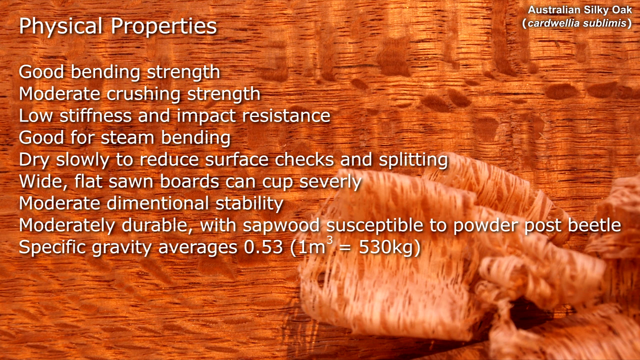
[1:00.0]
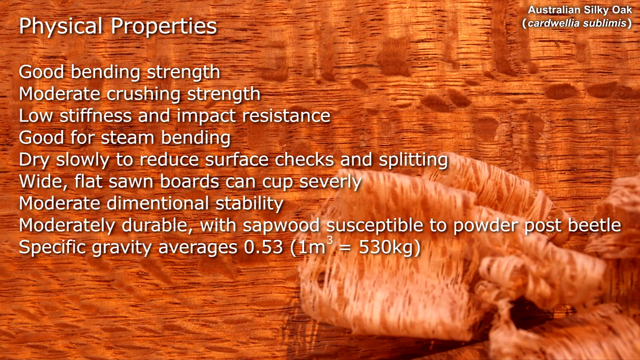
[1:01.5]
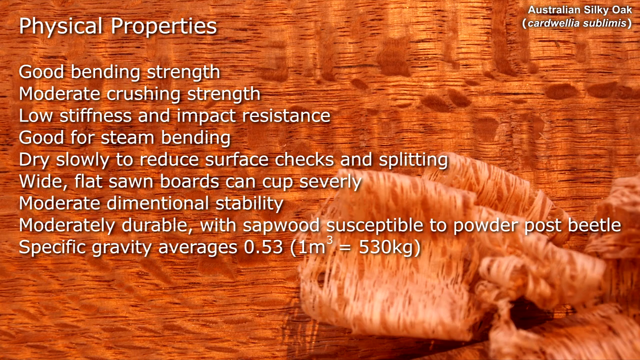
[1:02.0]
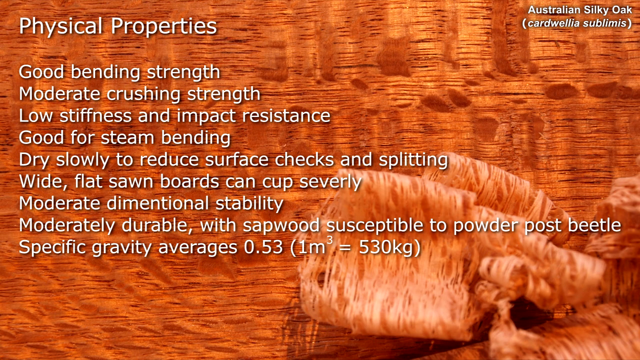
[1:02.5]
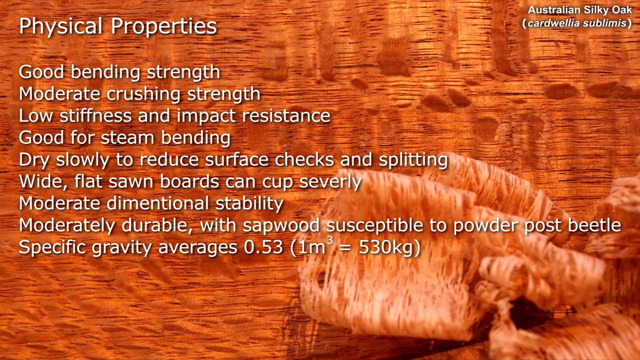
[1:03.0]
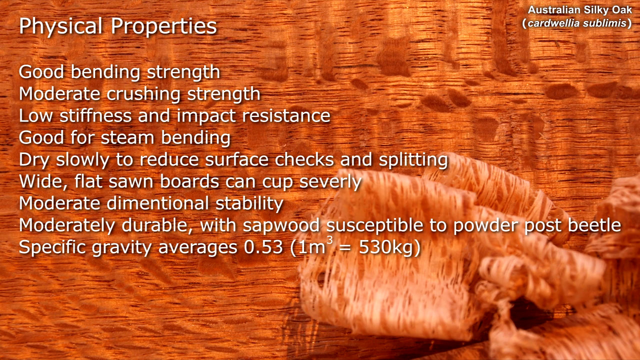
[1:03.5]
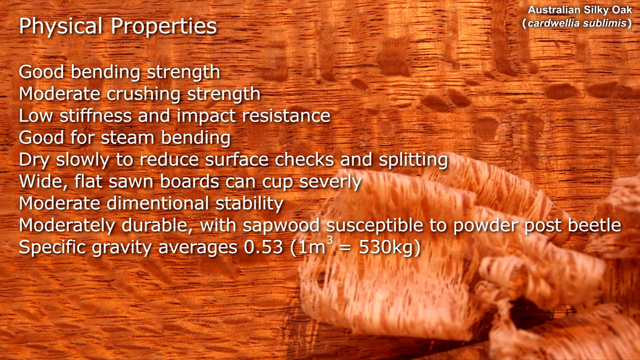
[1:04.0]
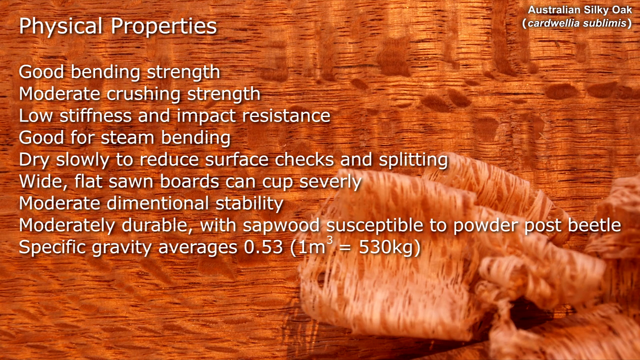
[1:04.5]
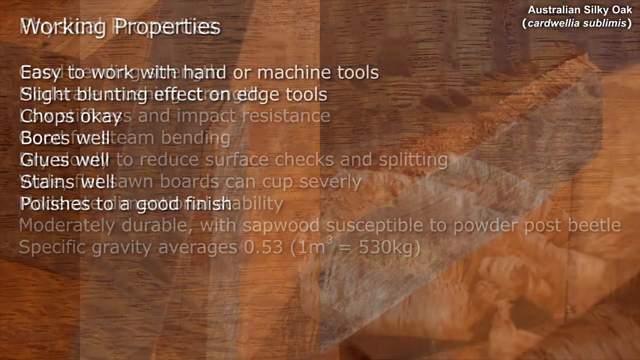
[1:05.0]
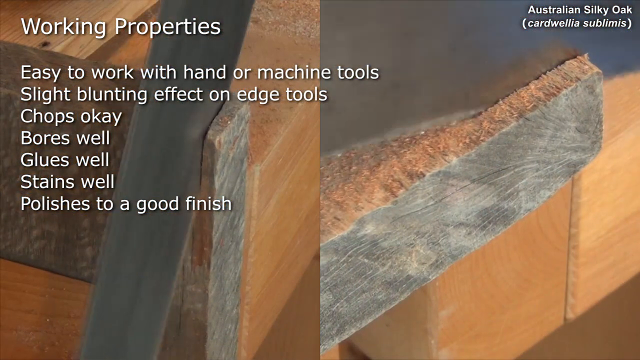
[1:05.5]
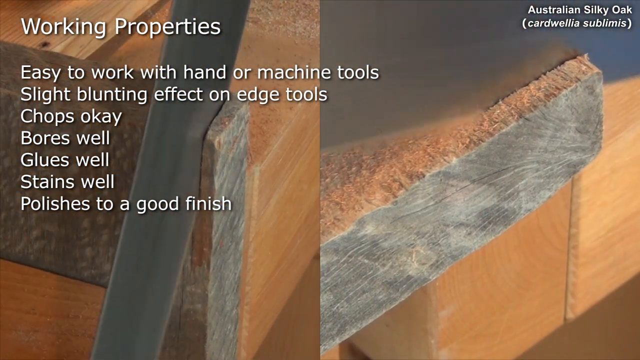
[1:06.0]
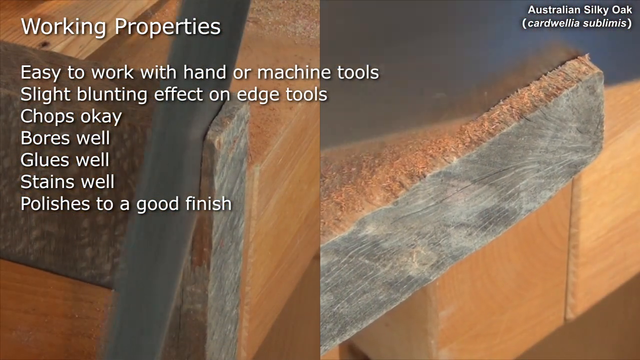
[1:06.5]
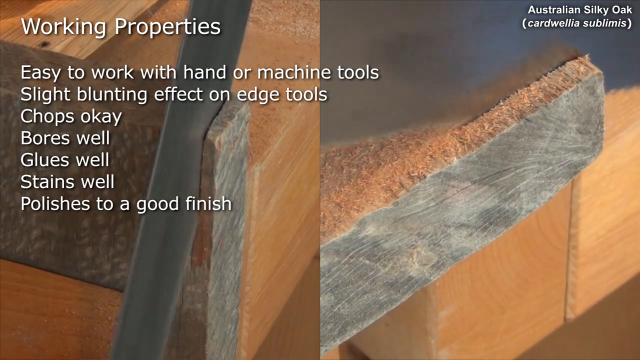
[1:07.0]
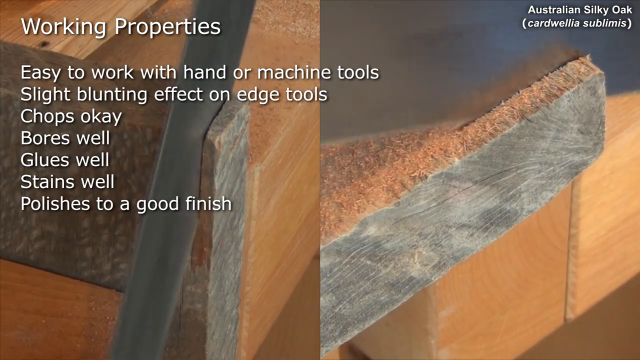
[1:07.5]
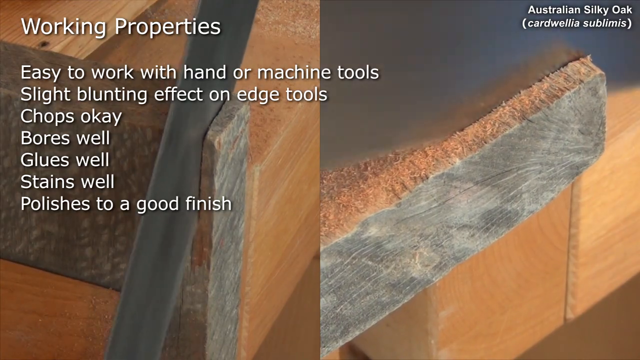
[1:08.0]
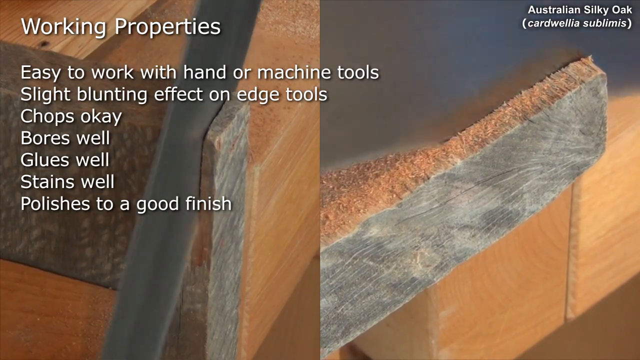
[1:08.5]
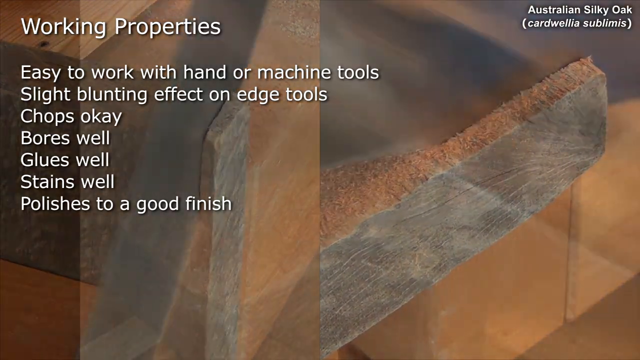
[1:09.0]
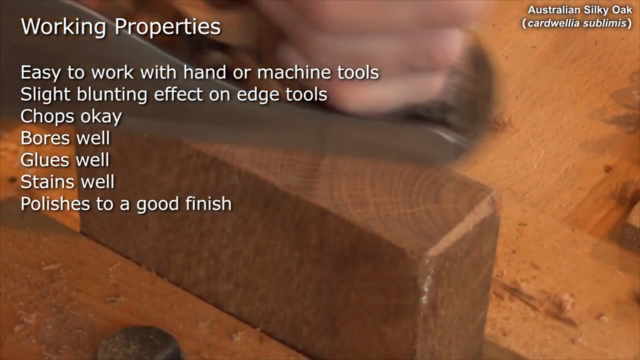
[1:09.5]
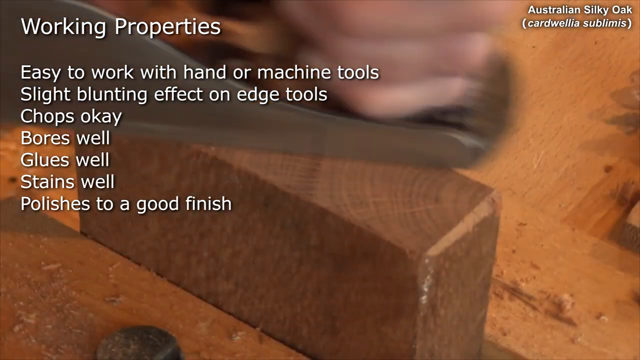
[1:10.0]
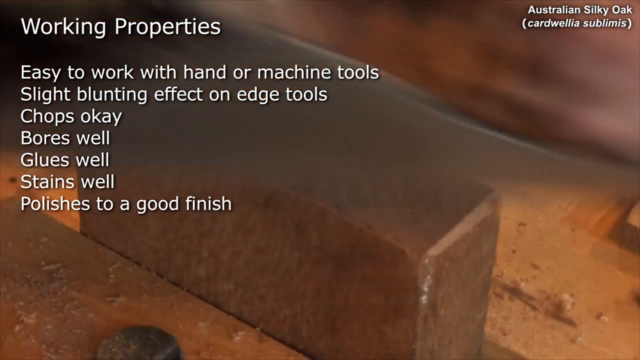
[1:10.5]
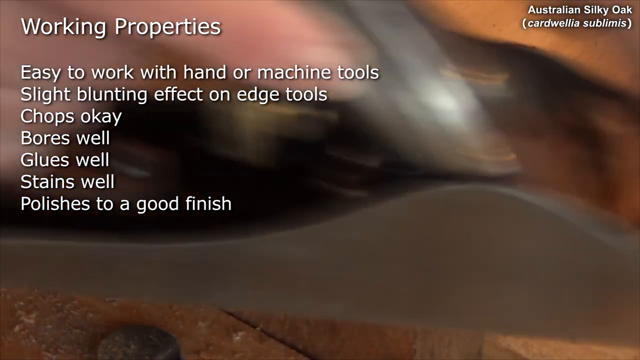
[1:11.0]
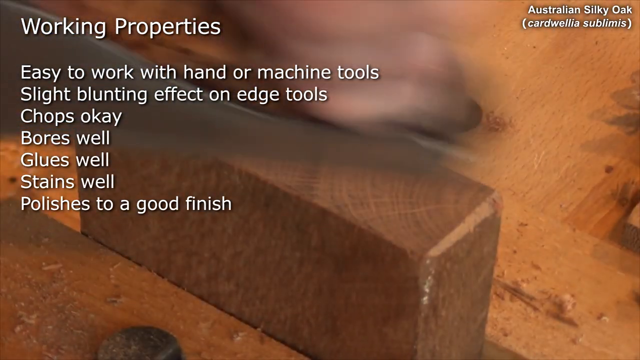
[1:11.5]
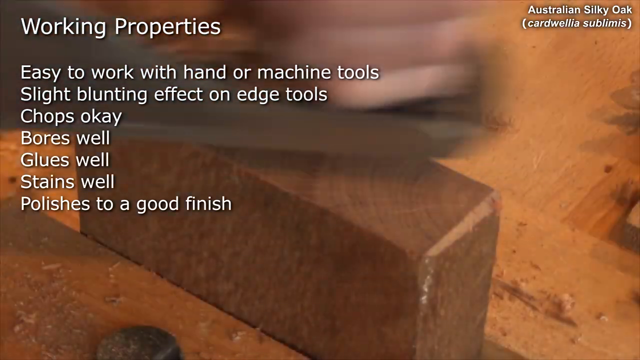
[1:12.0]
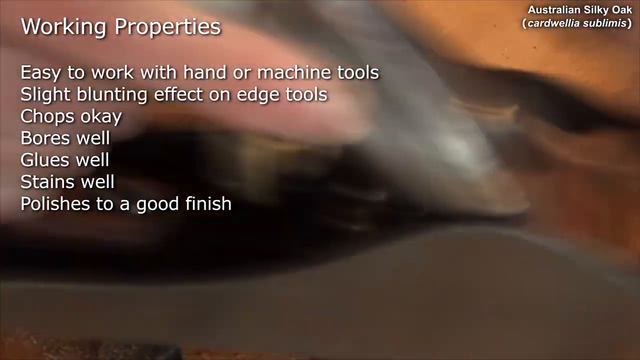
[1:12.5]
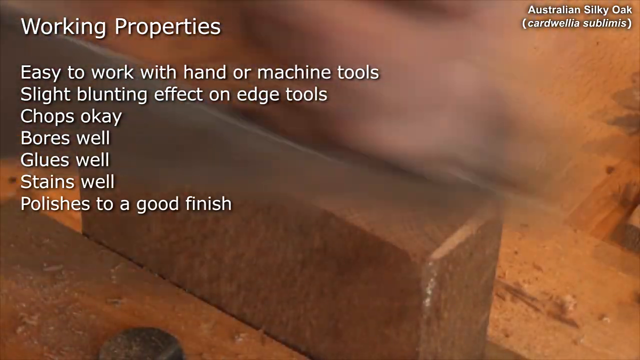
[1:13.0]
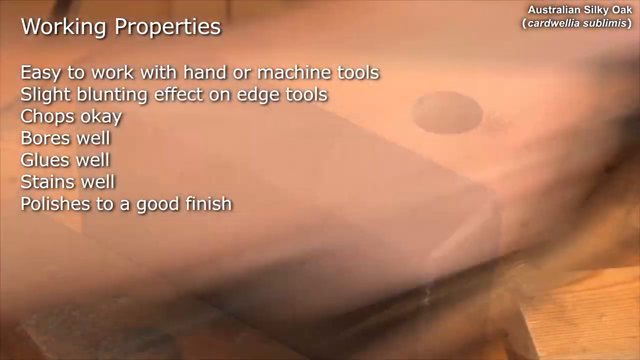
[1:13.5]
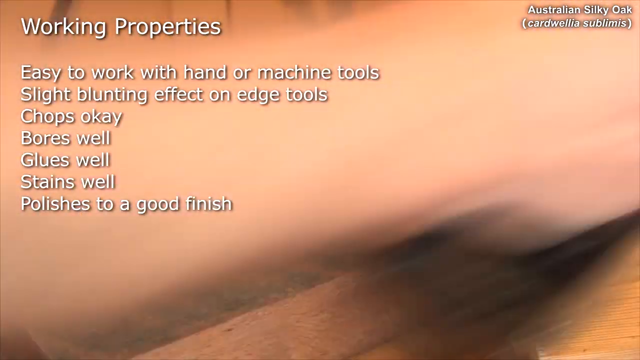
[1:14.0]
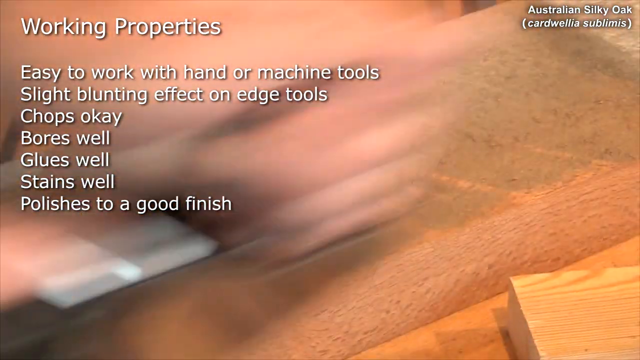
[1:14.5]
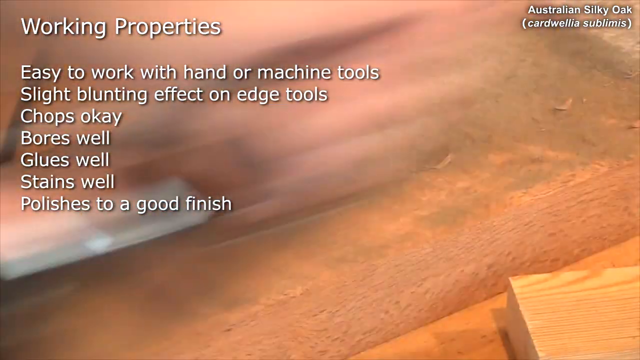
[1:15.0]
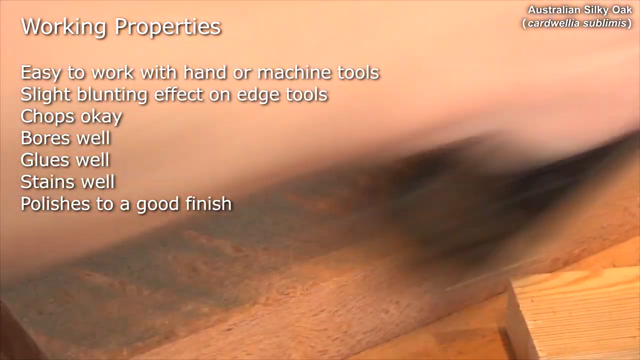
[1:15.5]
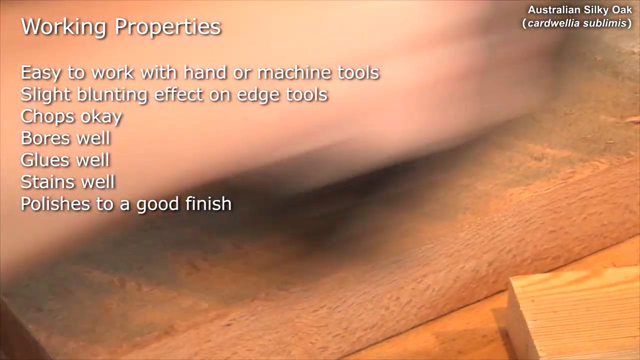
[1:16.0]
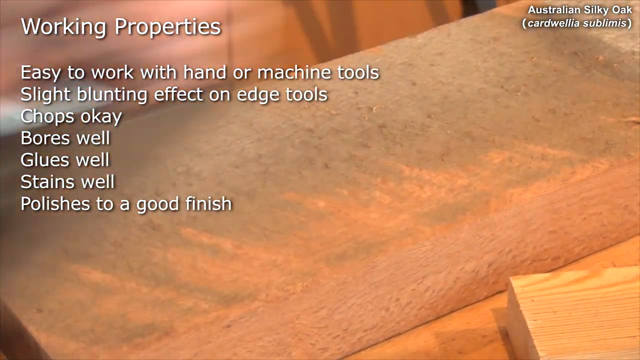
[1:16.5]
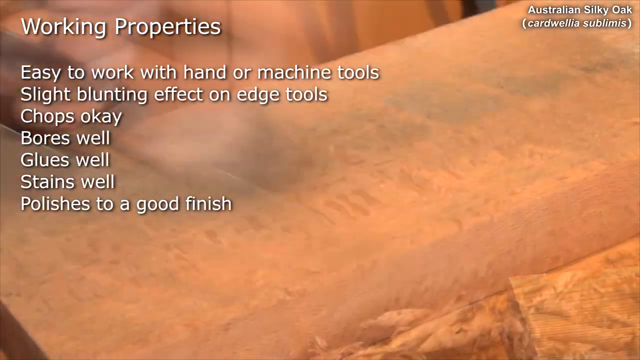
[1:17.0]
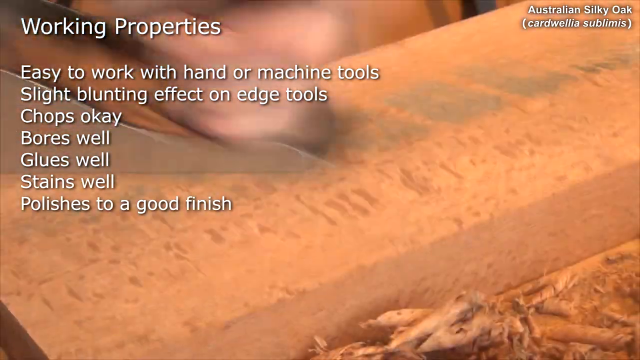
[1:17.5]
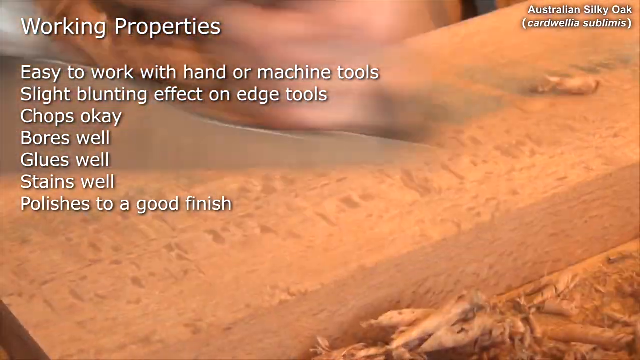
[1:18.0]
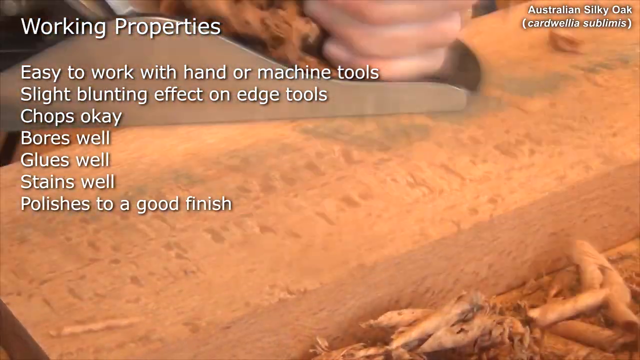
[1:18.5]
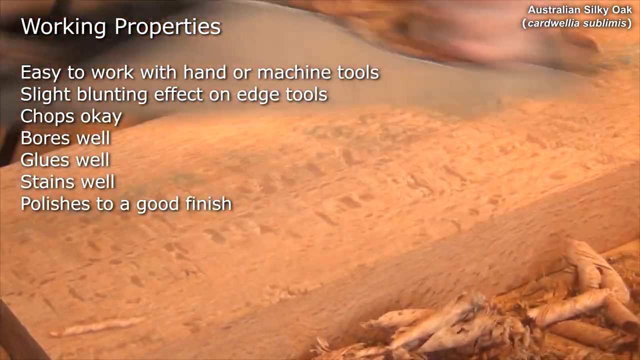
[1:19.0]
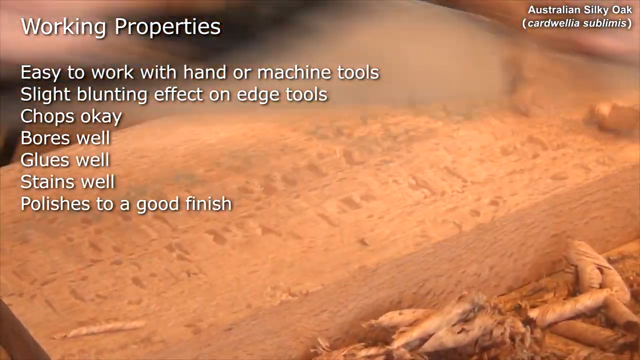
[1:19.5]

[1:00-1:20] Over a light brown, woody-textured background, the physical properties are listed in white font: "good bending strength, moderate crushing strength, low stiffness and impact resistance, good for steam bending, dry slowly to reduce surface checks and splitting, wide flat sawn boards can cup severly, moderate dimensional stability, moderately durable with sapwood susceptible to powder post beetle, specific gravity averages 0.53 (1 meter to the third power equals 530 kg)". The scene changes to what looks like a piece of light-colored wood being sawed into by a silver metal saw. A list on the left reads "working properties, easy to work with hand or machine tools, slight blunting effect on edge tools, chops okay, bores well, glues well, stains well, polishes to a good finish". The scene then changes to what looks like a brown block of brick or wood, where someone holds a silver handheld device and sands one of the side surfaces of the block, going back and forth. Next, what seems to be a person sands the same block or another block; most of the brown color now appears rubbed off, revealing a lighter brown wood color underneath. The person slides the flat silver handheld device over the surface of the wooden block as small, thin wooden shavings peel off and reveal a brighter surface.